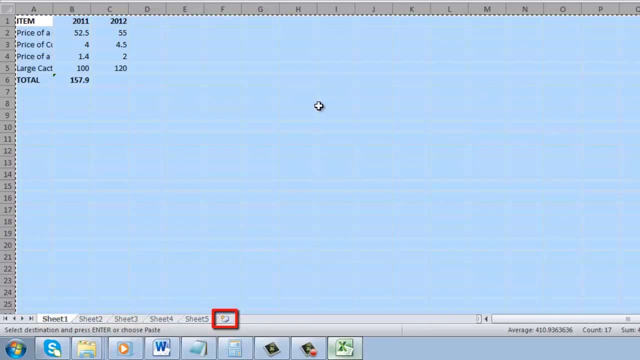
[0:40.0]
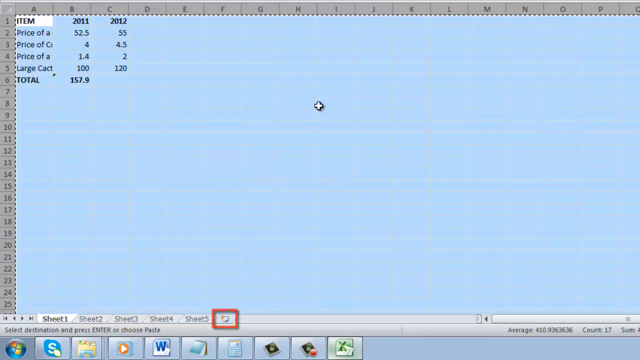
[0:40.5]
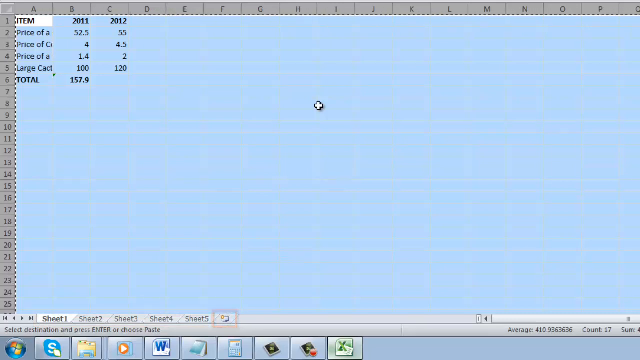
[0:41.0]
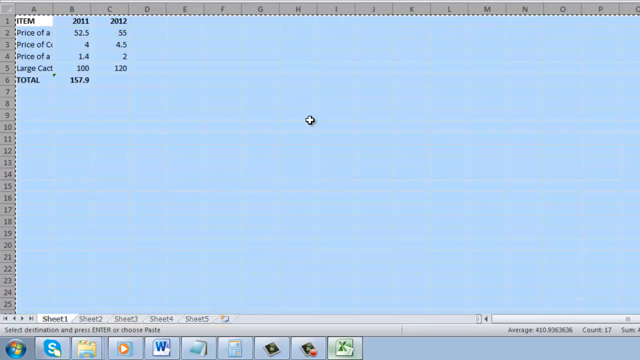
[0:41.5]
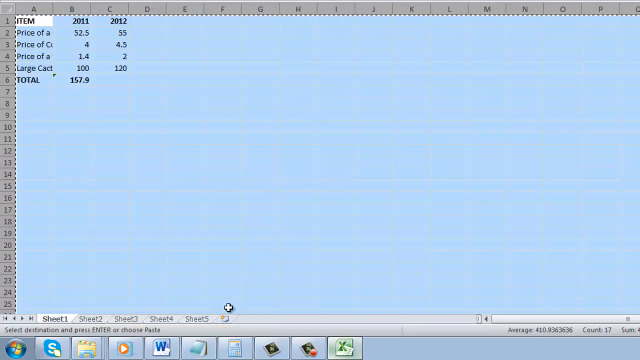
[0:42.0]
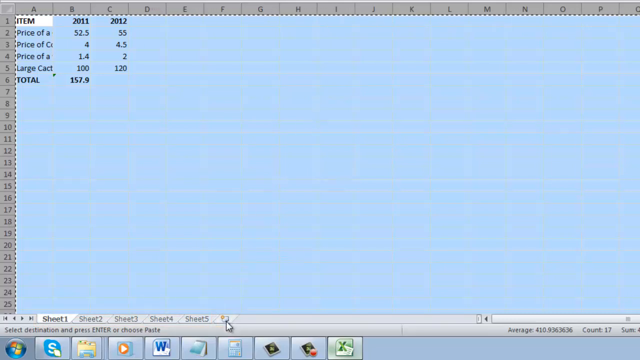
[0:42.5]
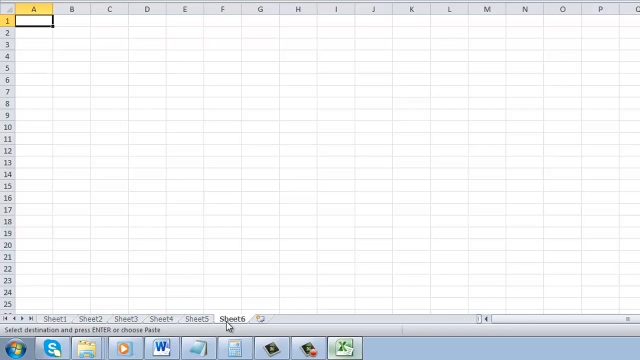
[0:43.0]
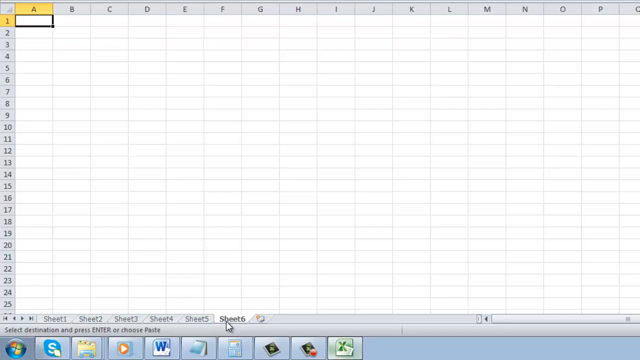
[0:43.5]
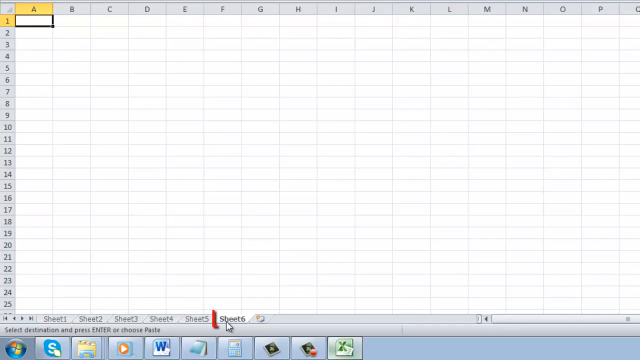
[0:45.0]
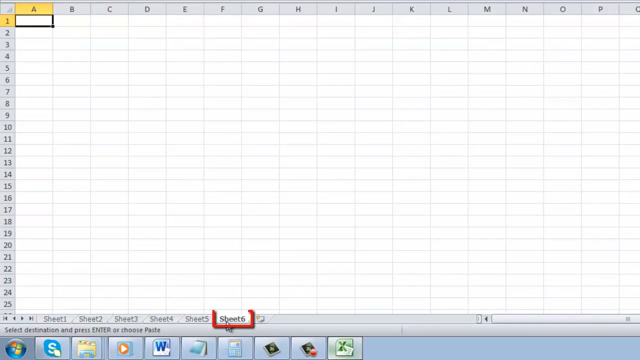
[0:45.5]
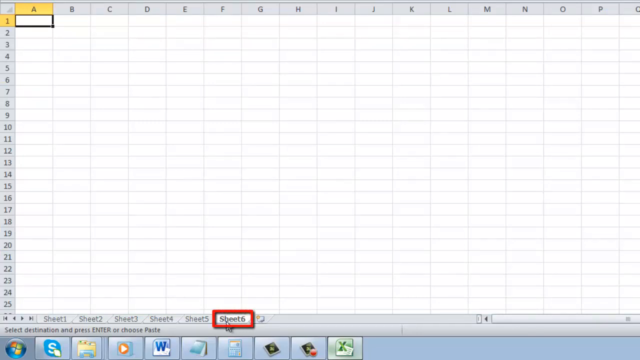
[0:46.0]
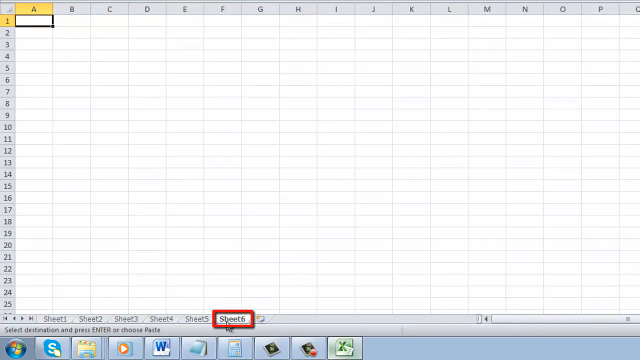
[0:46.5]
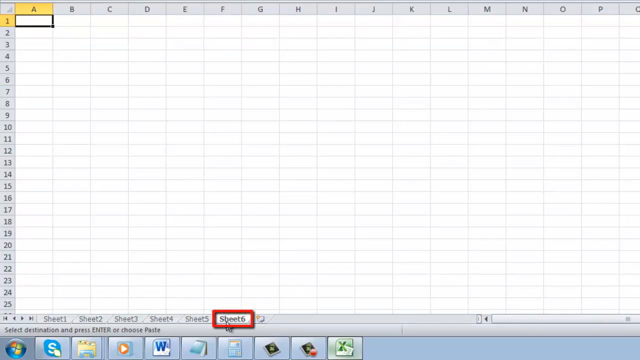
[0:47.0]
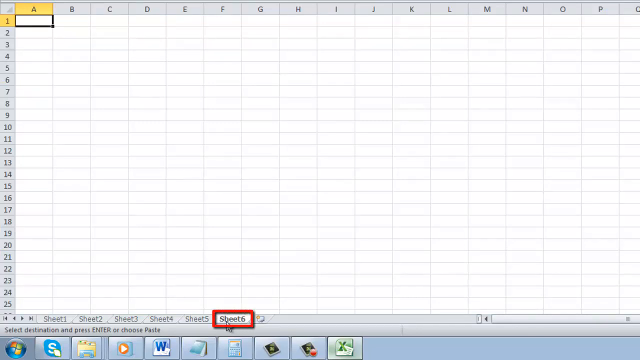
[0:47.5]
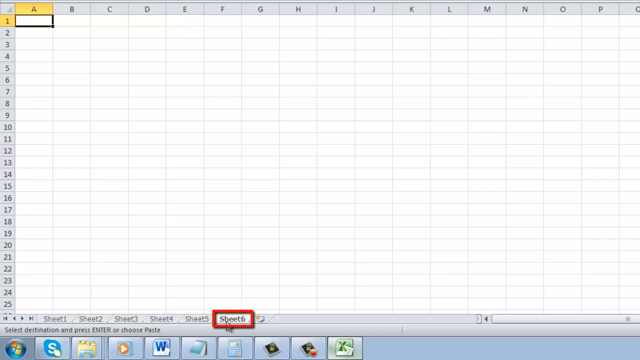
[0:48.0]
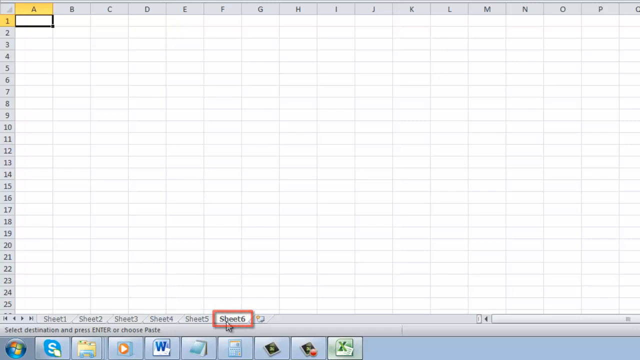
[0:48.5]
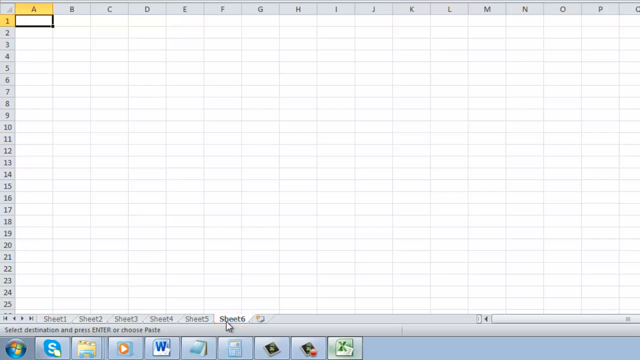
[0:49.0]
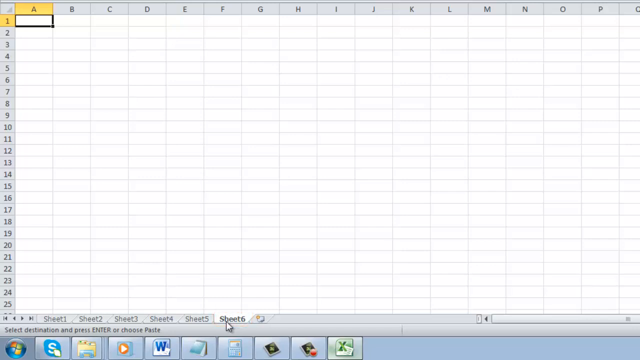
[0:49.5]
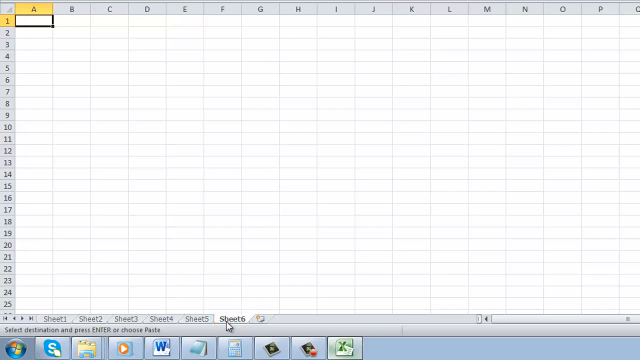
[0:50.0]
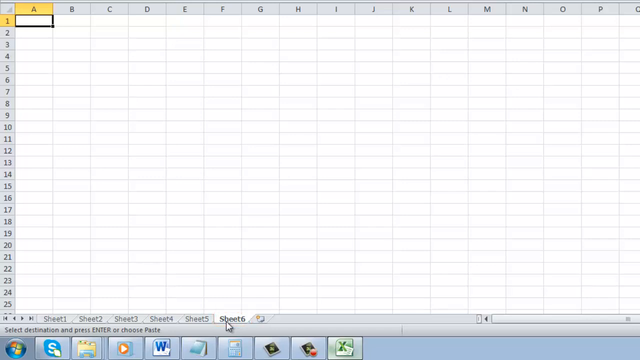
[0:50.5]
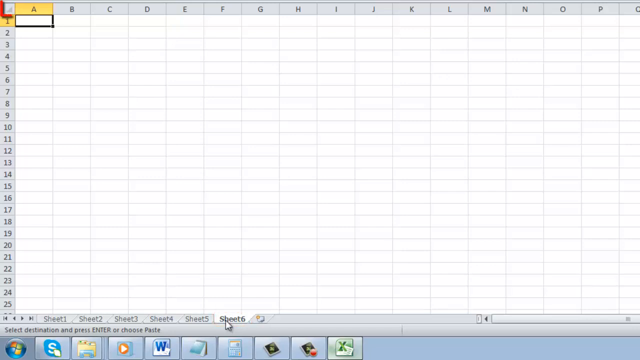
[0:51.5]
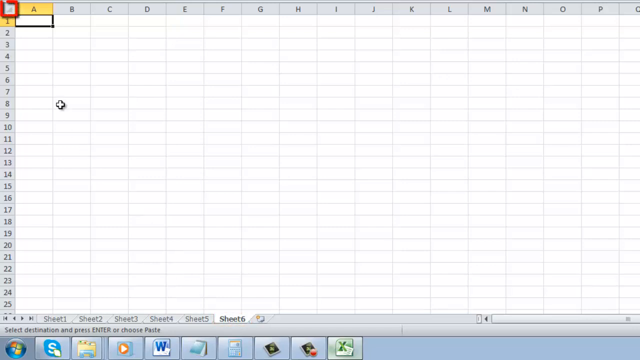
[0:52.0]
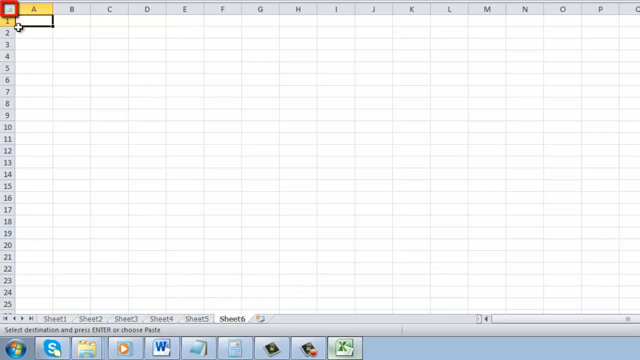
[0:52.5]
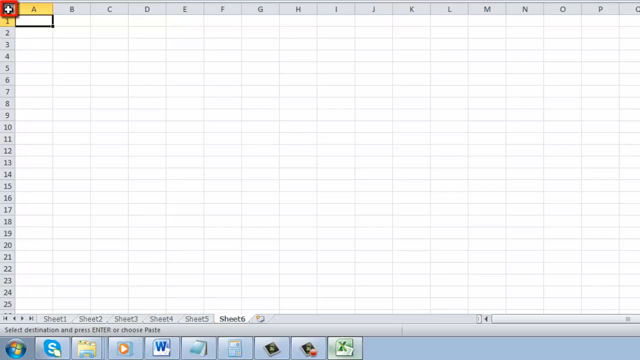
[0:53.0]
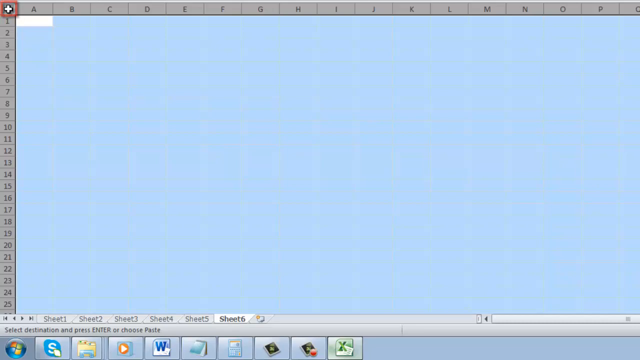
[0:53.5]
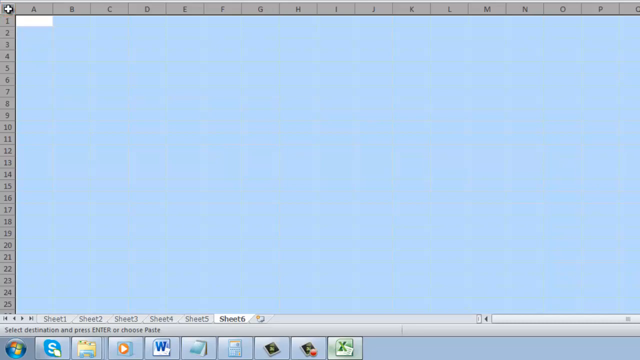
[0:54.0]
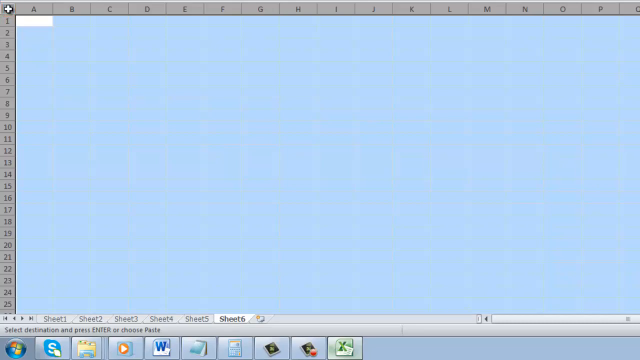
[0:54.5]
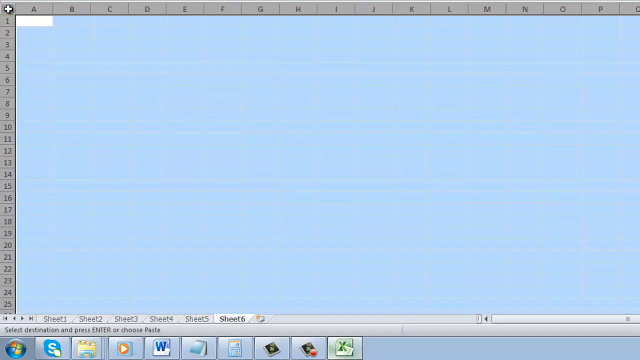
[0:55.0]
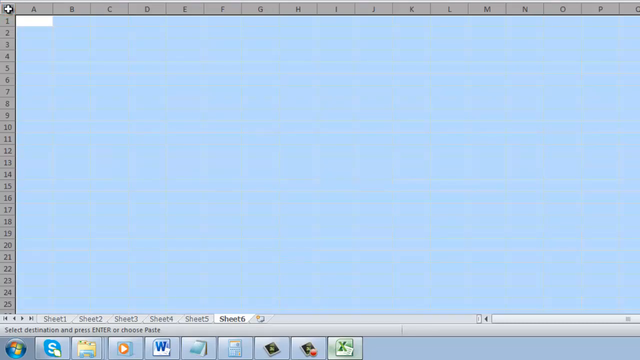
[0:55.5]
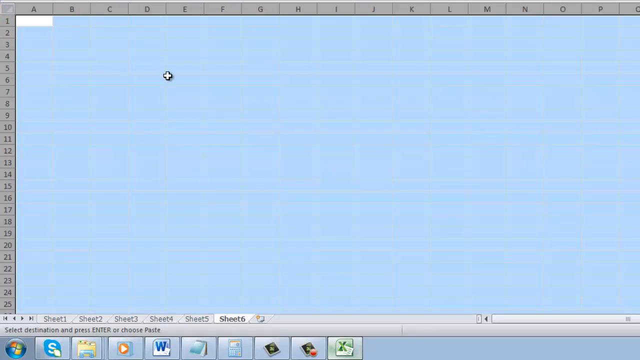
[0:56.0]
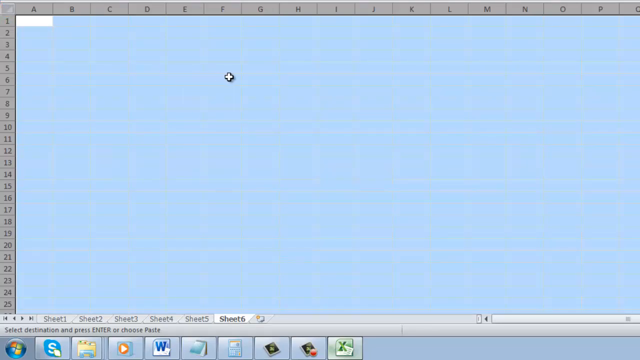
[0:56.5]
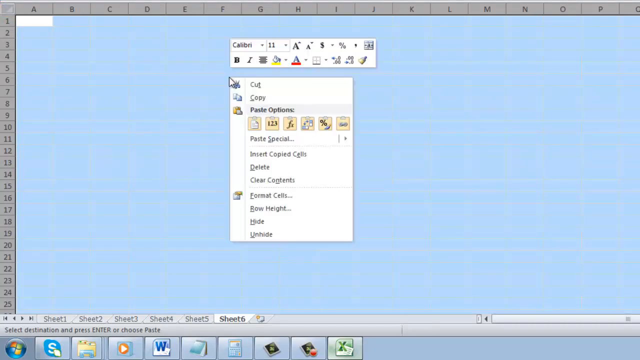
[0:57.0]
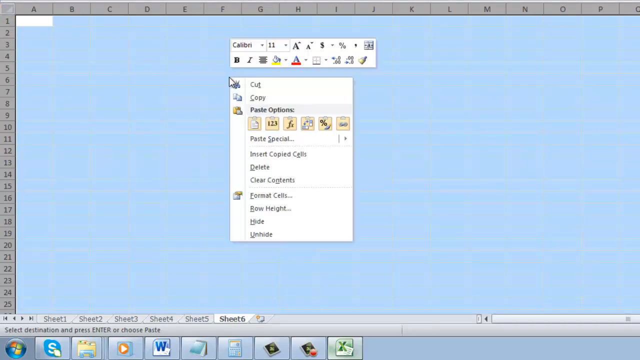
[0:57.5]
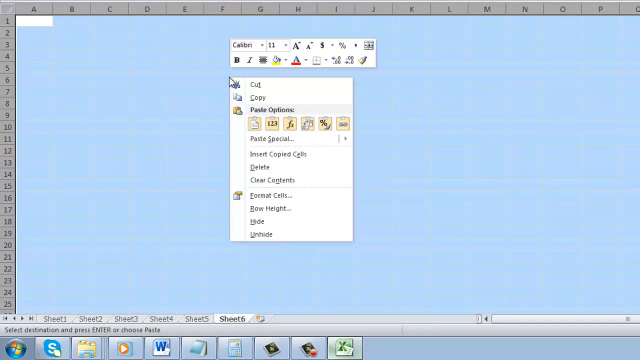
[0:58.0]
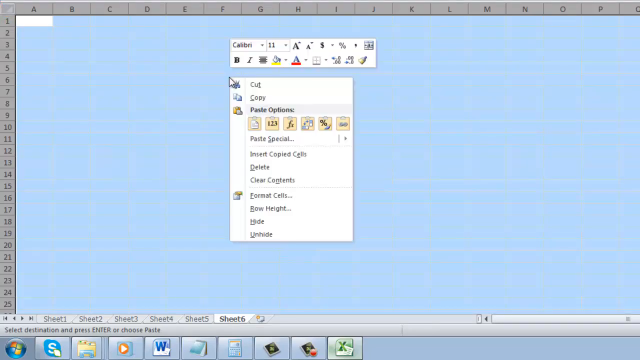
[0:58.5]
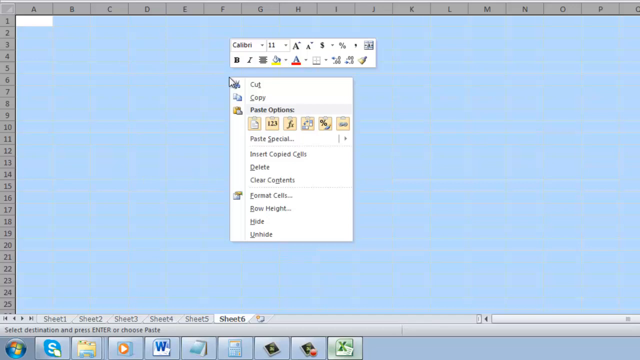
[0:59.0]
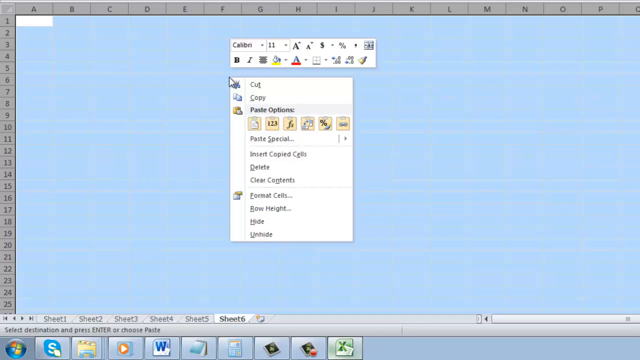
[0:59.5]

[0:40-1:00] The cursor goes to the bottom of the Excel screen, where the items are still highlighted, and clicks the tiny new sheet button near sheet 5. A new sheet appears, sheet 6. The cursor then goes back to the button above row 1 and to the left of column A and highlights the entire sheet. It then moves to the middle of the screen and right-clicks, bringing up a menu of options including copy, paste, move and select. The cursor hovers as if about to click paste, but paste is not clicked yet. The person seems to be a professor highlighting things such as where the new sheet button is.